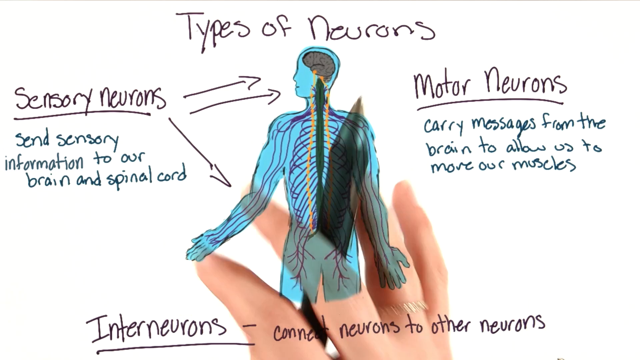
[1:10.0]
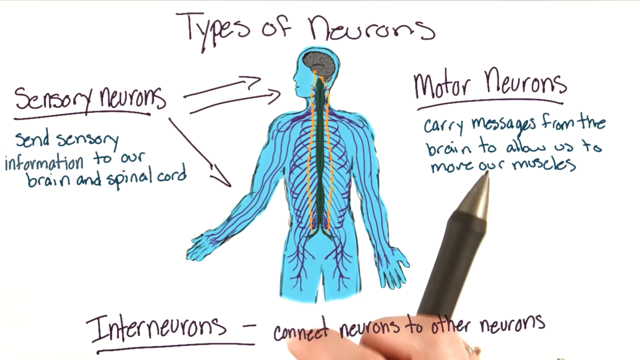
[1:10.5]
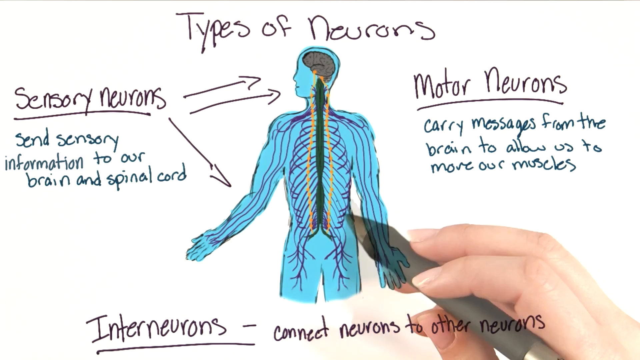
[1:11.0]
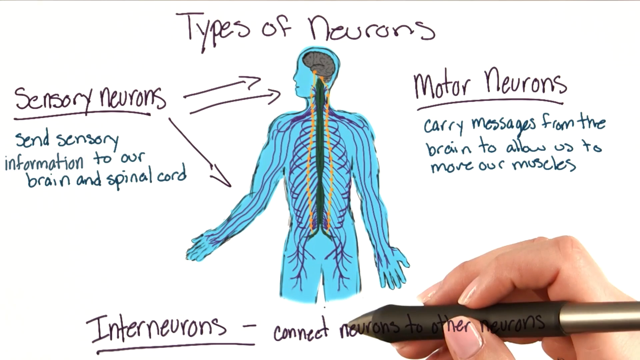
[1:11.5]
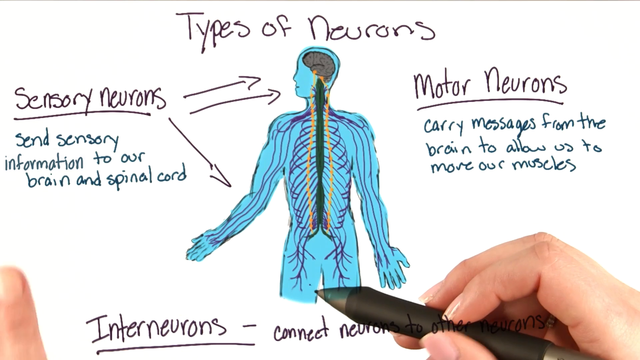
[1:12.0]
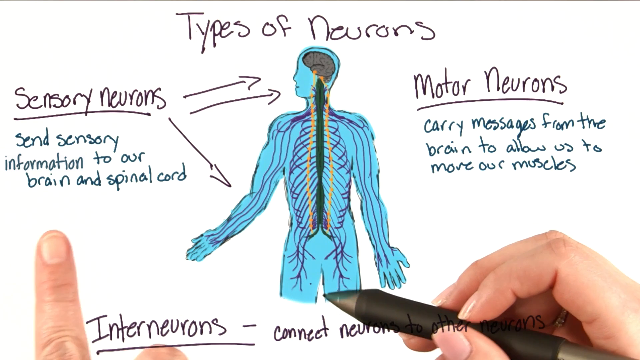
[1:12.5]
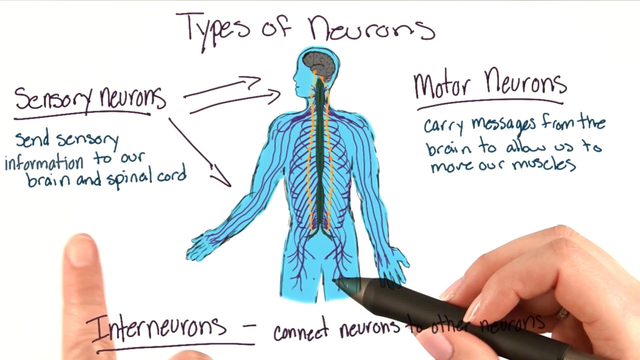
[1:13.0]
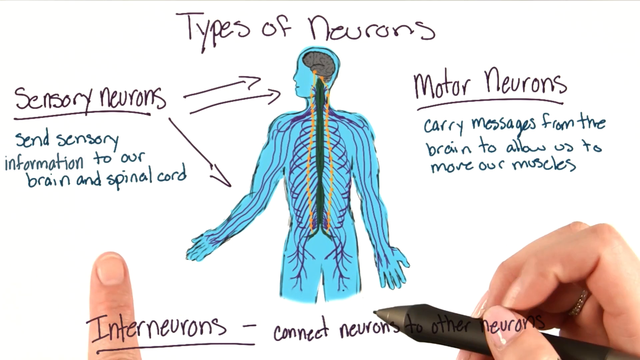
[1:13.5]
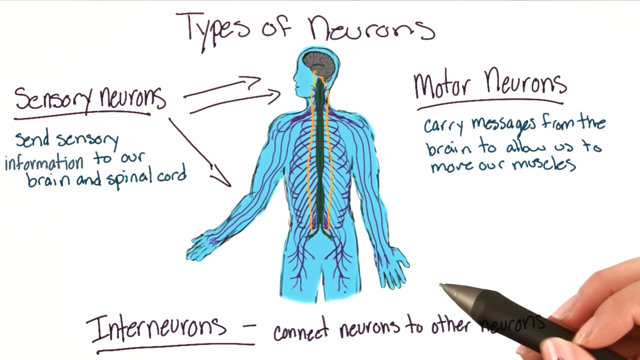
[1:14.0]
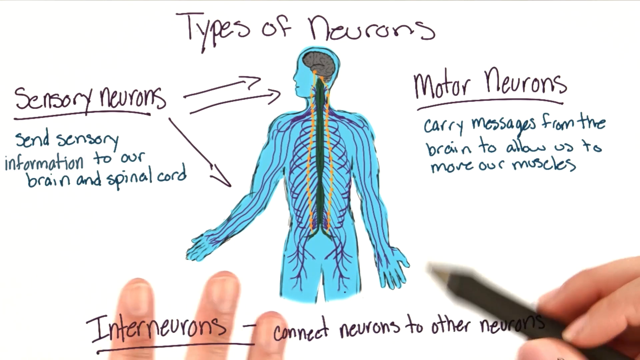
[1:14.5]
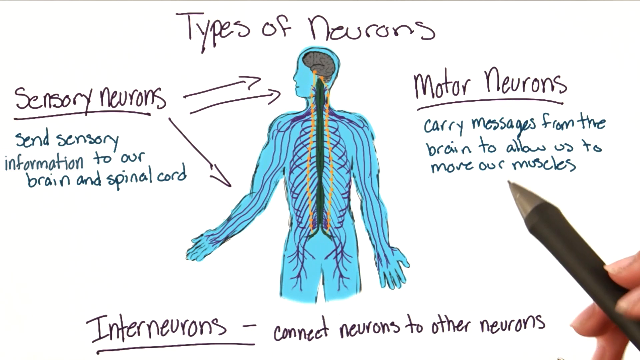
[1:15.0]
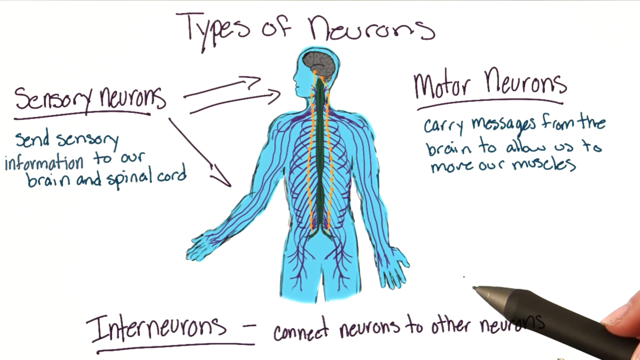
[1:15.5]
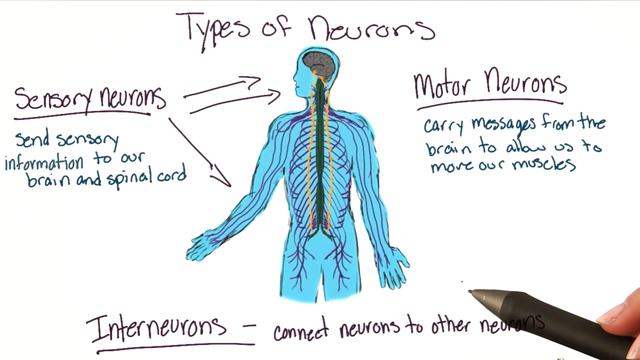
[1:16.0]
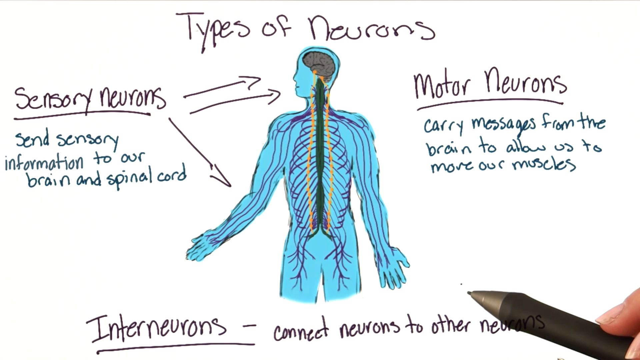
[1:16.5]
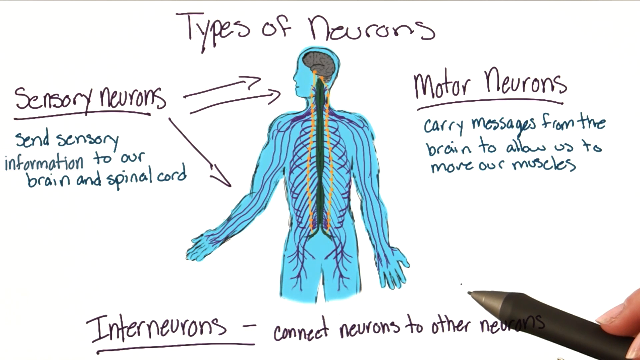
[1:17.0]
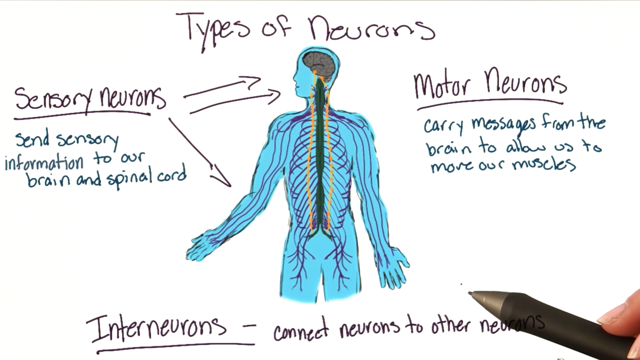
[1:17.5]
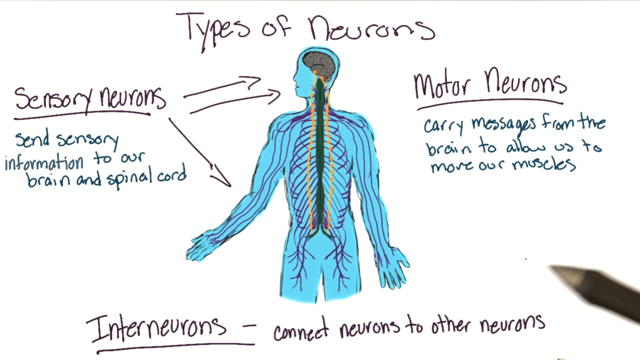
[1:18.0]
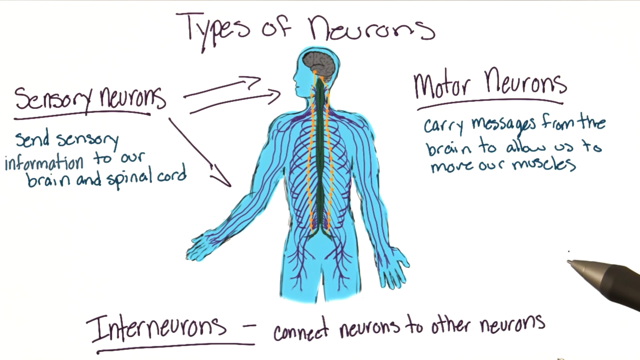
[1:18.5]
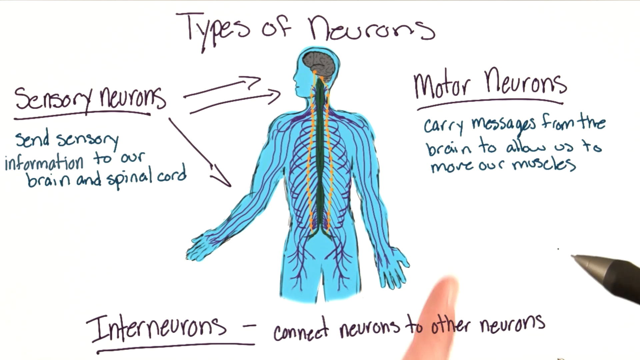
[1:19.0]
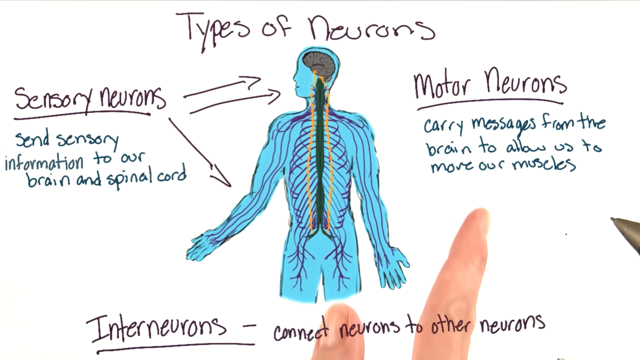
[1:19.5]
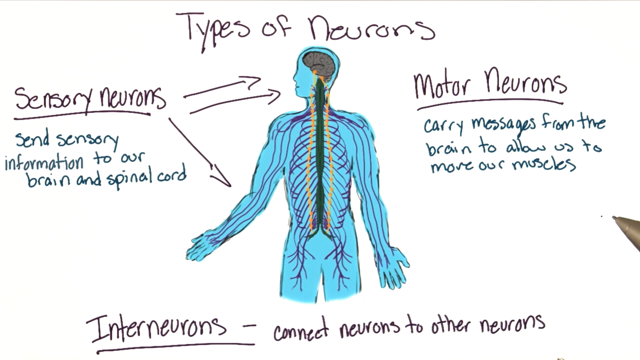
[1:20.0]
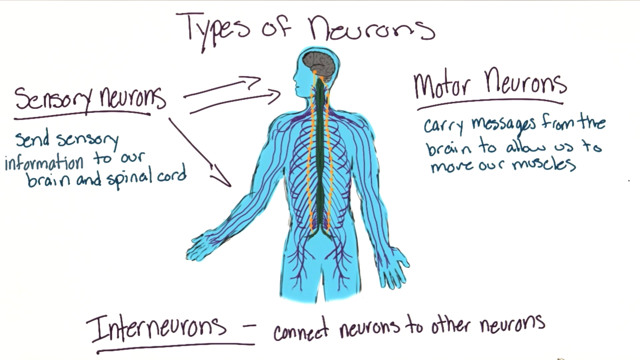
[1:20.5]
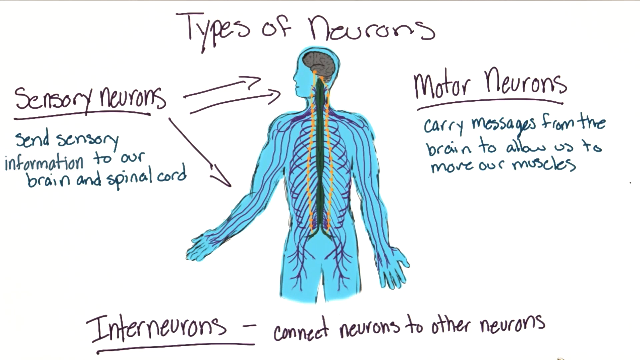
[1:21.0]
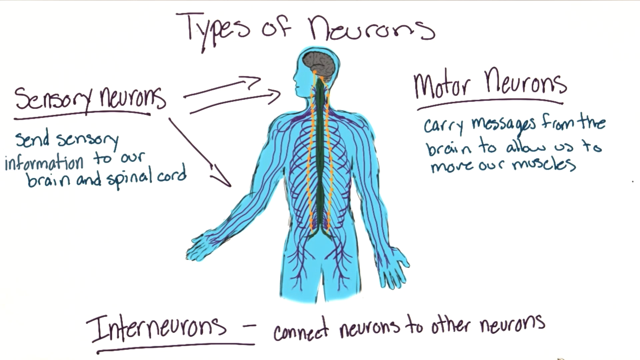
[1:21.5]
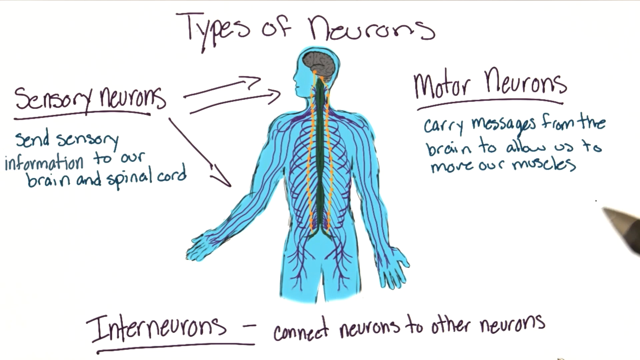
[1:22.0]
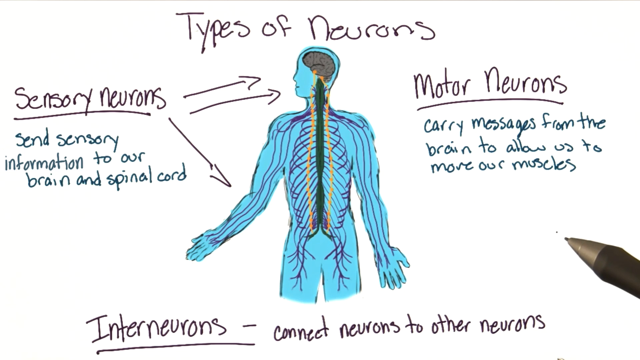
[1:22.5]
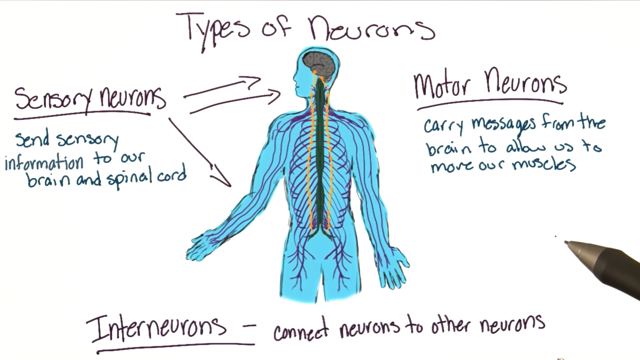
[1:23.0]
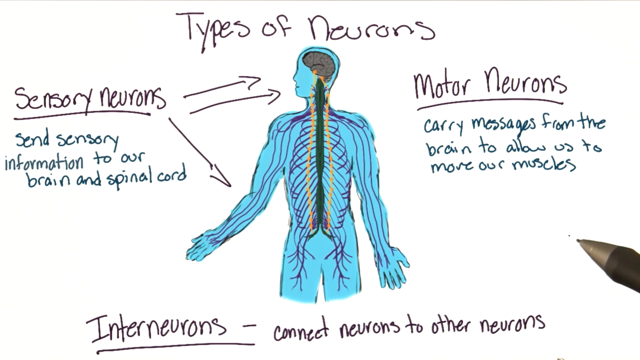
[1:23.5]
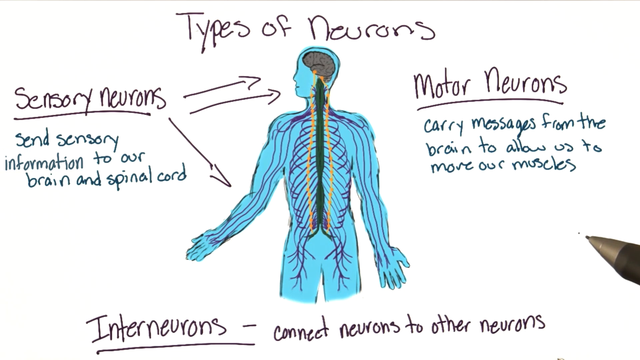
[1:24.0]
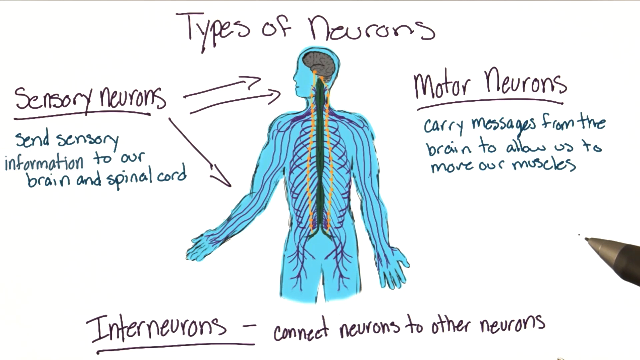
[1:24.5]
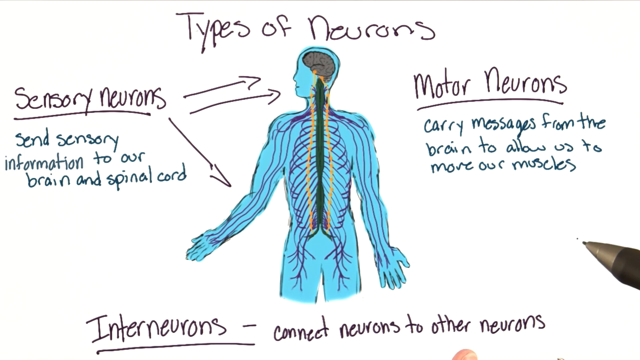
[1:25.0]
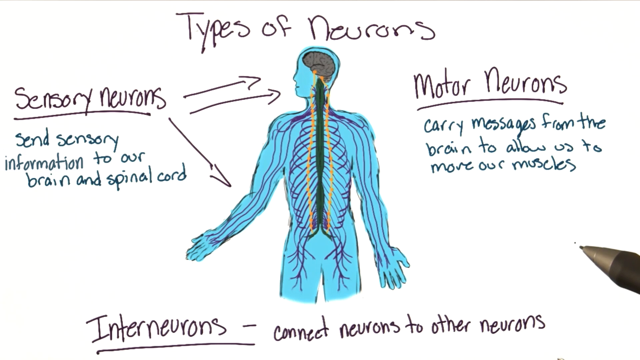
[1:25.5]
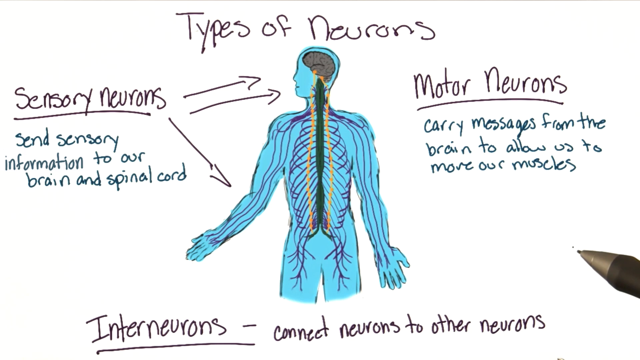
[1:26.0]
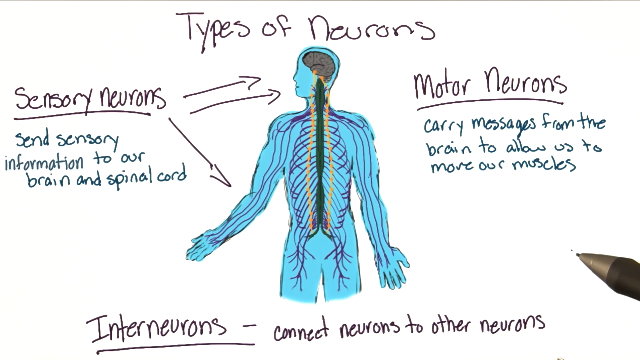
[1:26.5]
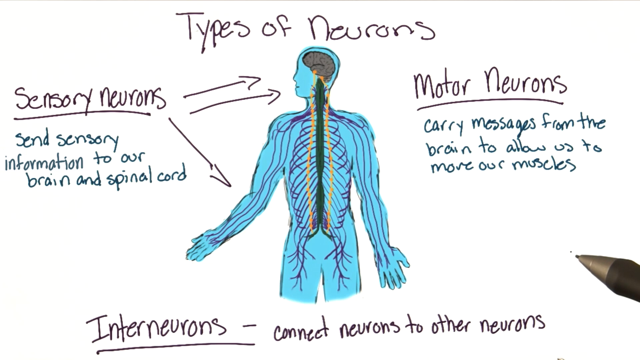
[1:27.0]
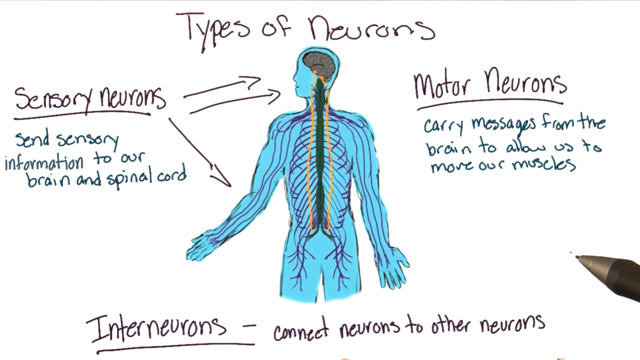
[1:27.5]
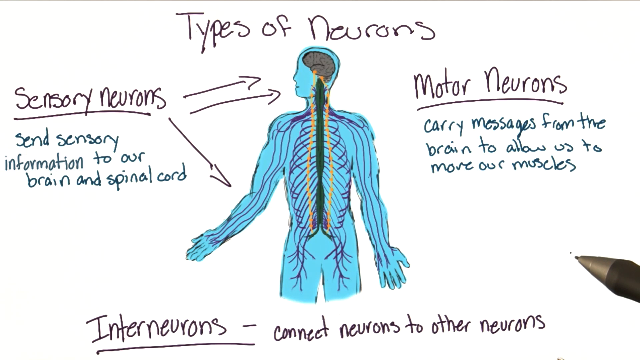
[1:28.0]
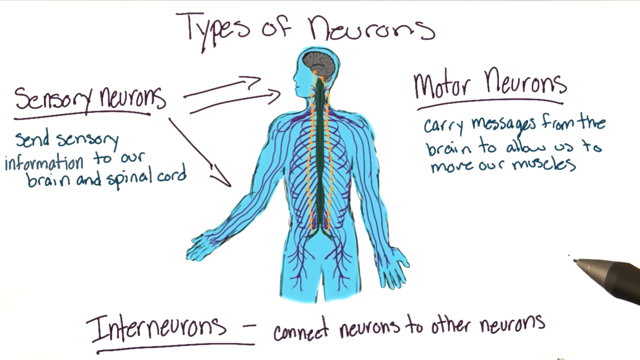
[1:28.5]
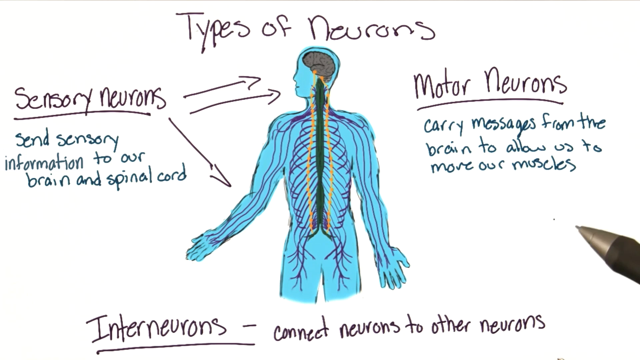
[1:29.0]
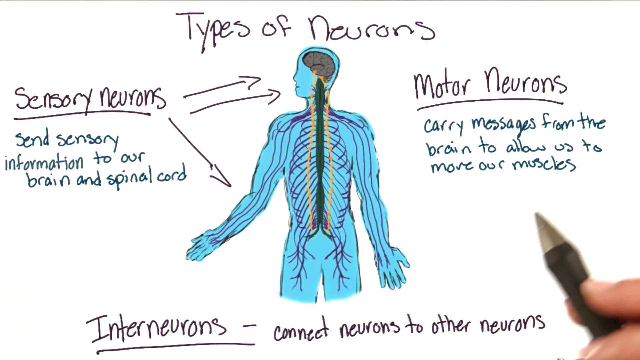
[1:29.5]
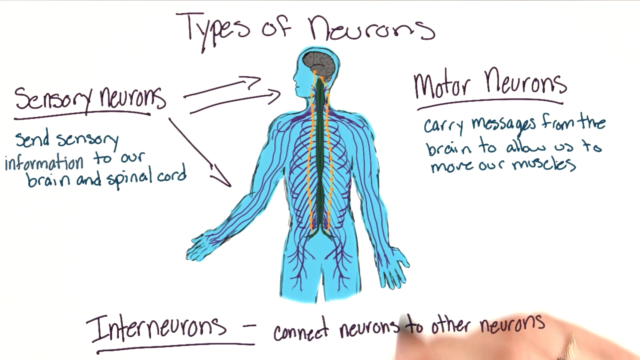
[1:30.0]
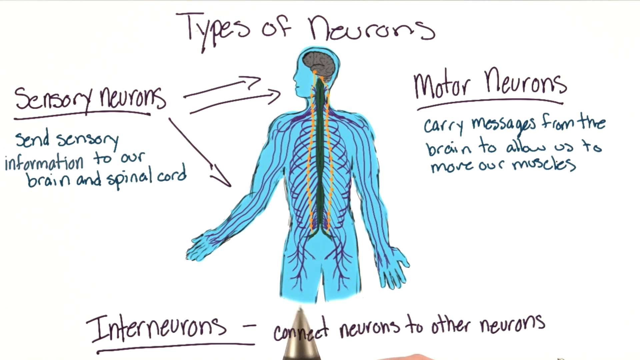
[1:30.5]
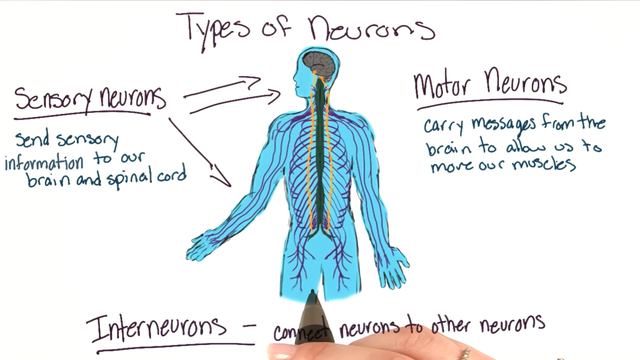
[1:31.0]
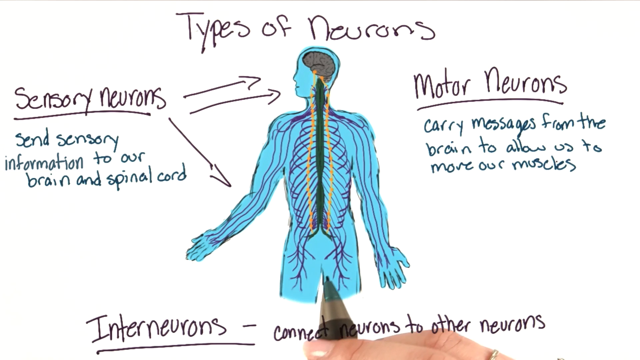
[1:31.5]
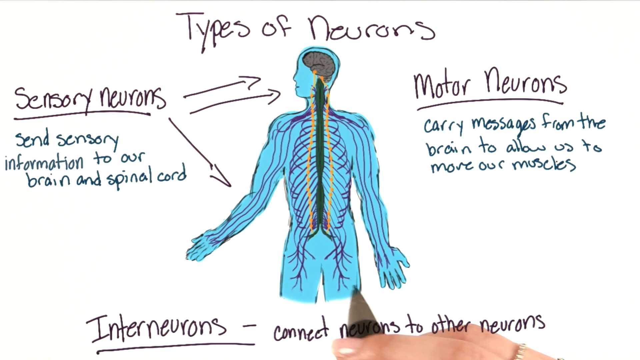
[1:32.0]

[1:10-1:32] The hand holding the pen is on the right, and another hand appears on the left. This hand points up with a finger to "sensory neurons" on the left, as if pointing and explaining it, and points out "motor neurons" on the right side and its message. The pen and hand come up from the right side to the middle of the screen and point at the drawn diagram. Above the figure, written in black pen, it says "types of neurons." On the left of the figure it says "sensory neurons," underlined, with two arrows pointing at the head and one pointing down to the slightly bent-up arm on the left. The head of the drawn figure points to the left. To the right of the figure it says "motor neurons," underlined, and below that "carry messages from the brain to allow us to move our muscles." Below the figure it says "interneurons," underlined, with a dash and "connect neurons to other neurons."